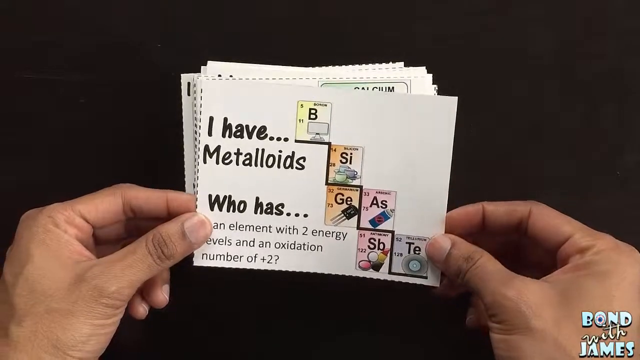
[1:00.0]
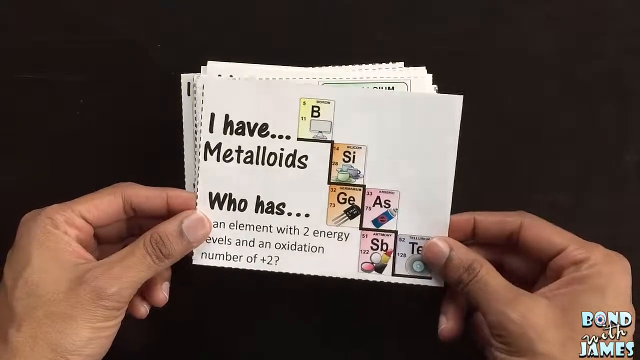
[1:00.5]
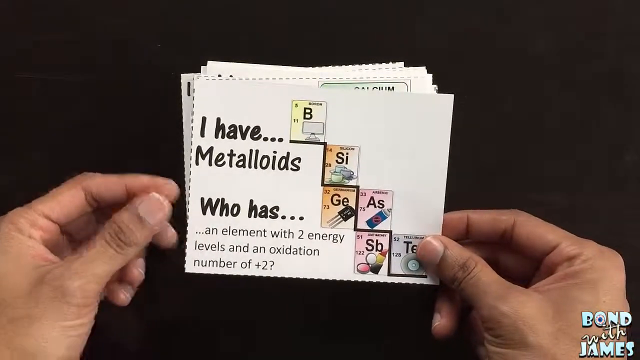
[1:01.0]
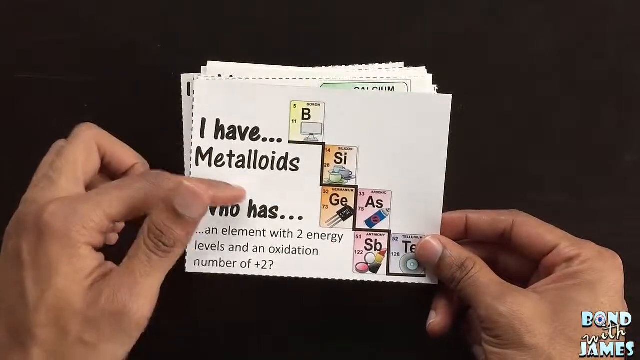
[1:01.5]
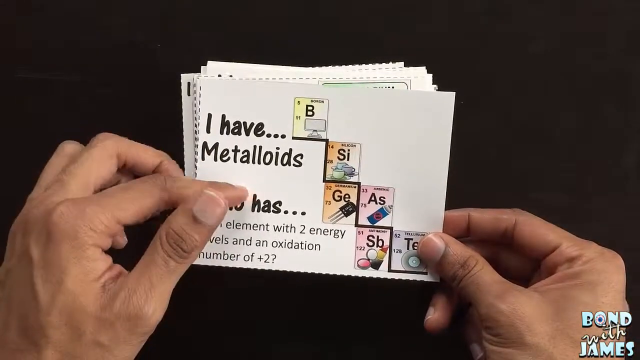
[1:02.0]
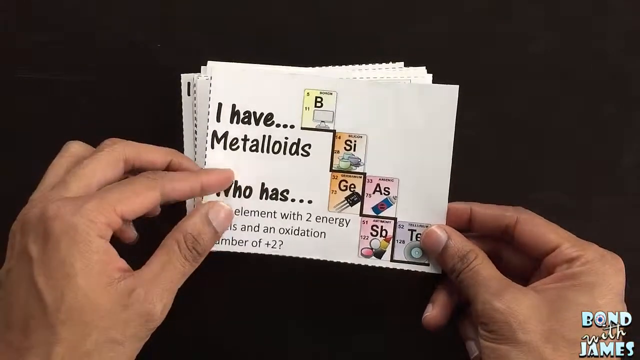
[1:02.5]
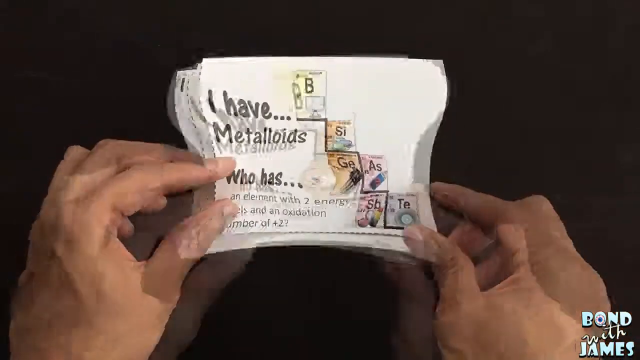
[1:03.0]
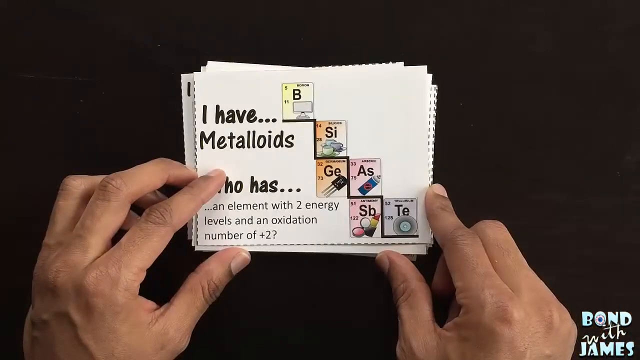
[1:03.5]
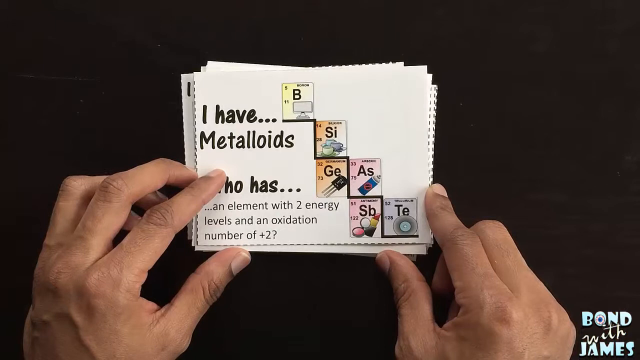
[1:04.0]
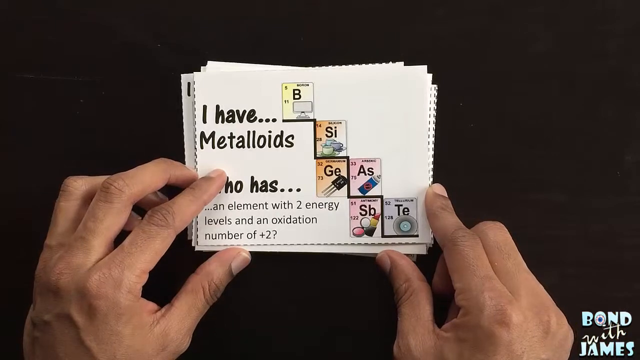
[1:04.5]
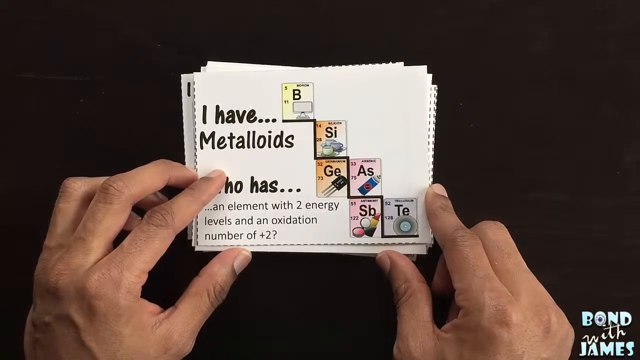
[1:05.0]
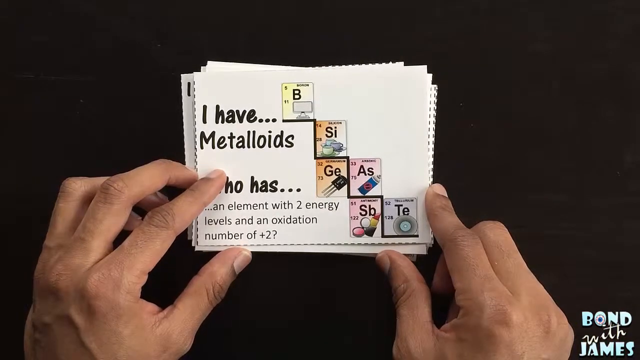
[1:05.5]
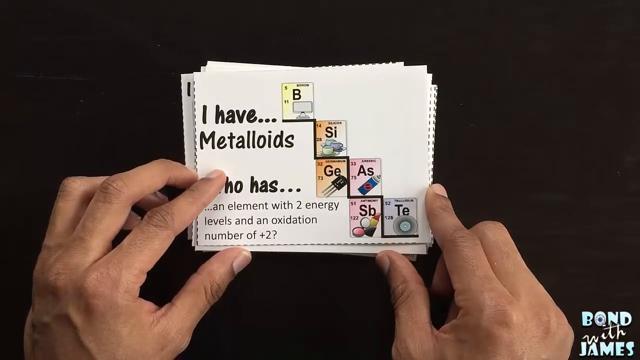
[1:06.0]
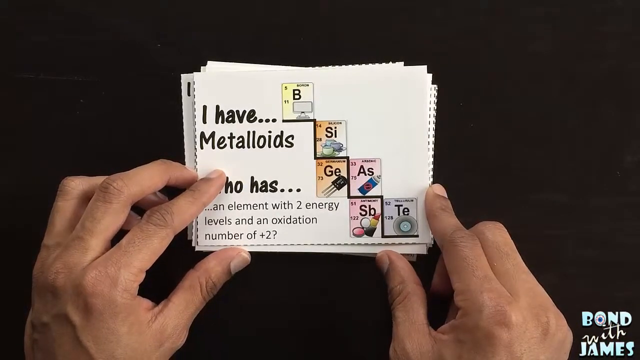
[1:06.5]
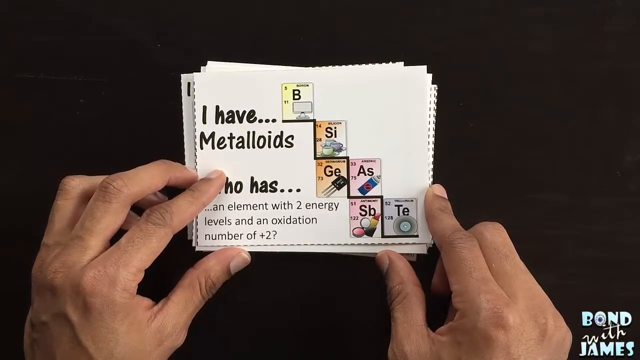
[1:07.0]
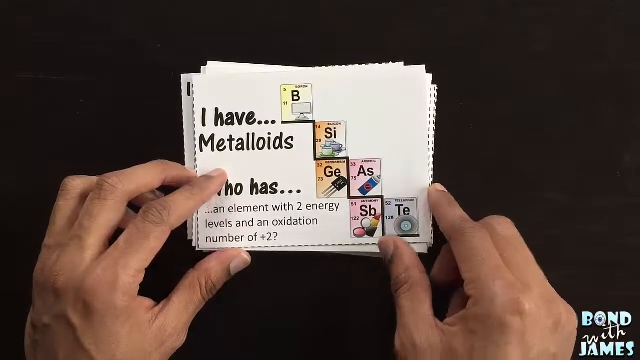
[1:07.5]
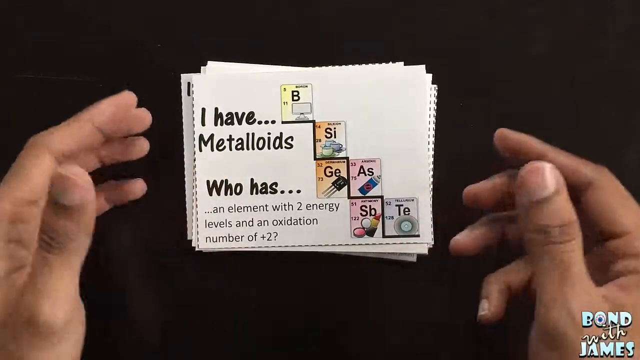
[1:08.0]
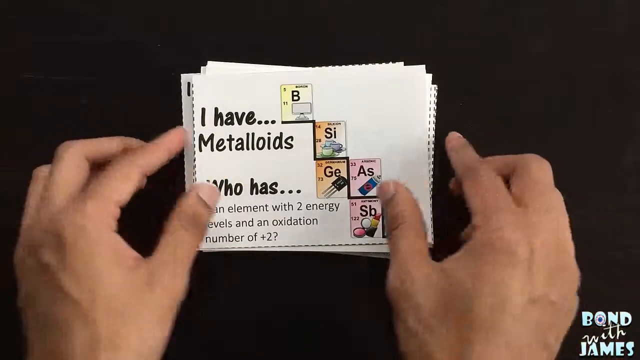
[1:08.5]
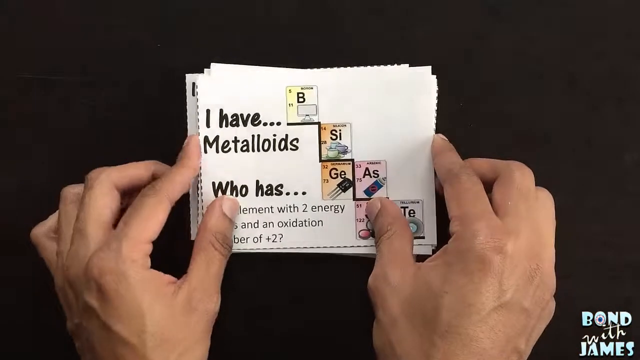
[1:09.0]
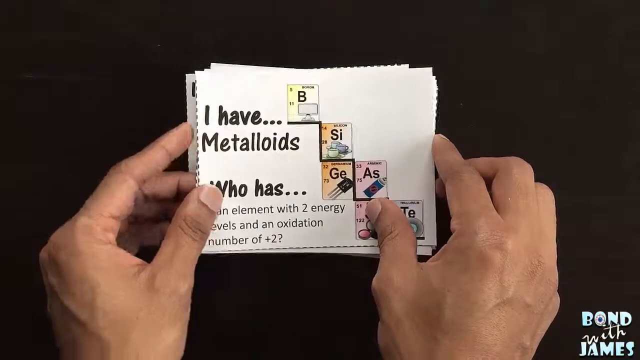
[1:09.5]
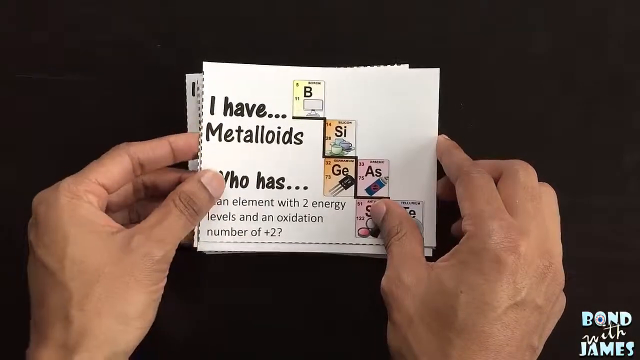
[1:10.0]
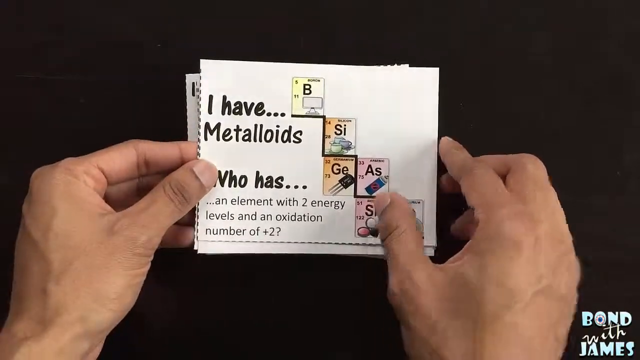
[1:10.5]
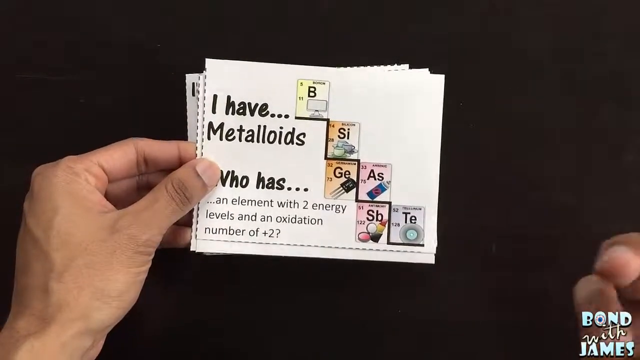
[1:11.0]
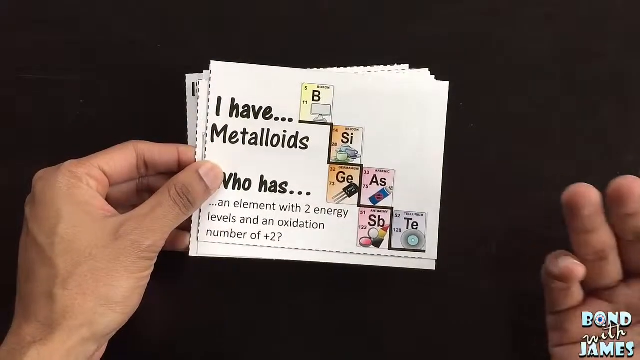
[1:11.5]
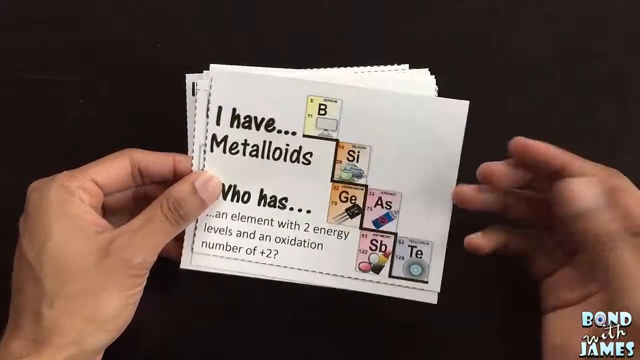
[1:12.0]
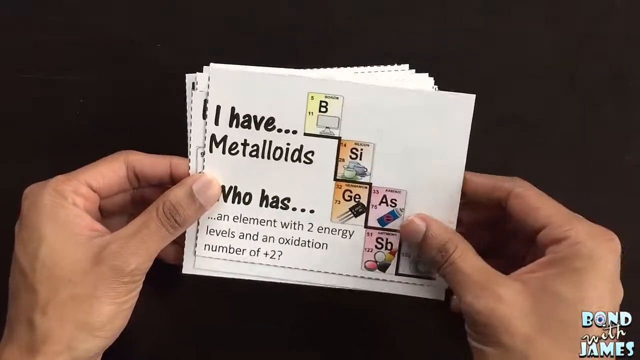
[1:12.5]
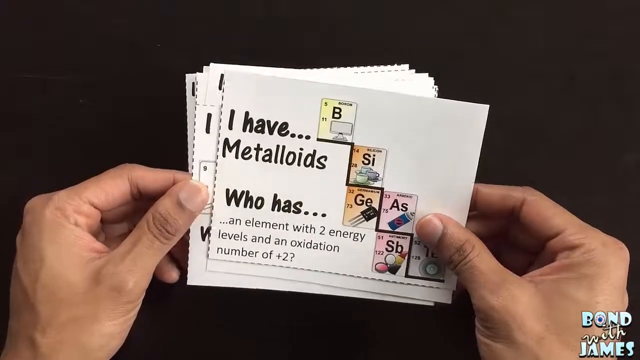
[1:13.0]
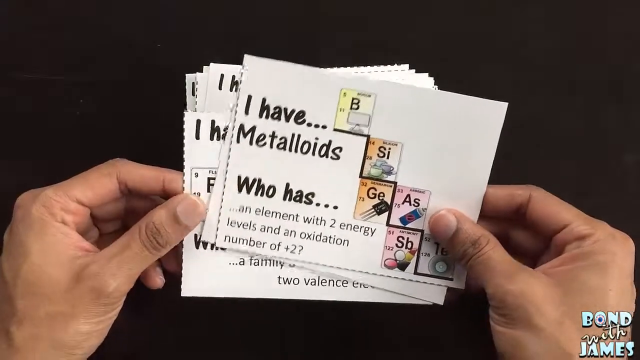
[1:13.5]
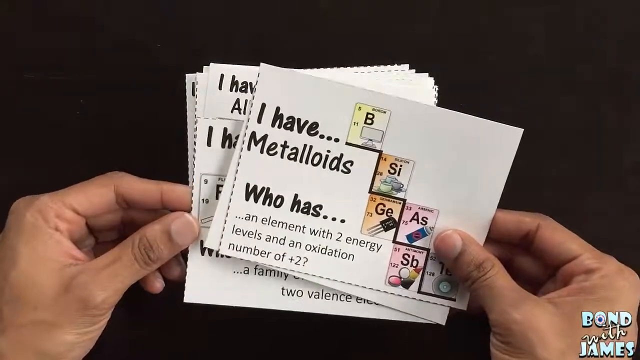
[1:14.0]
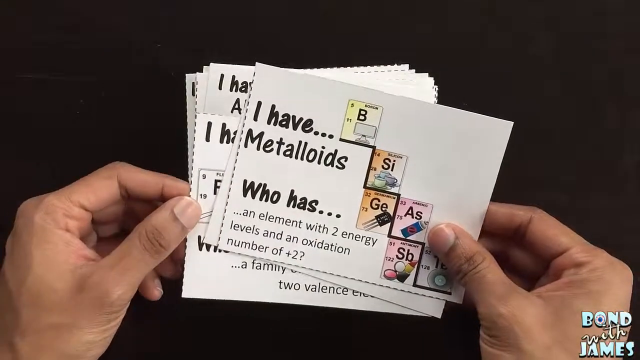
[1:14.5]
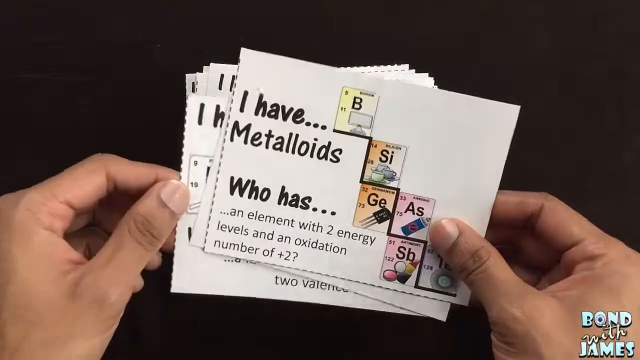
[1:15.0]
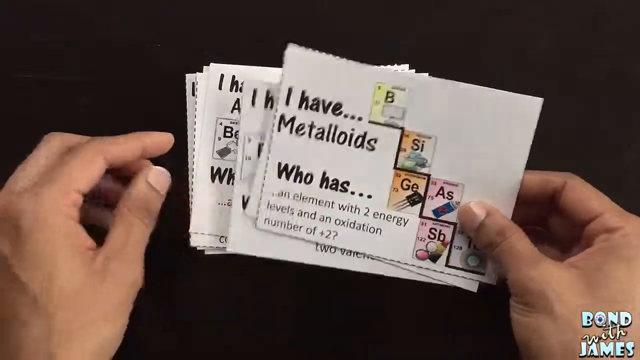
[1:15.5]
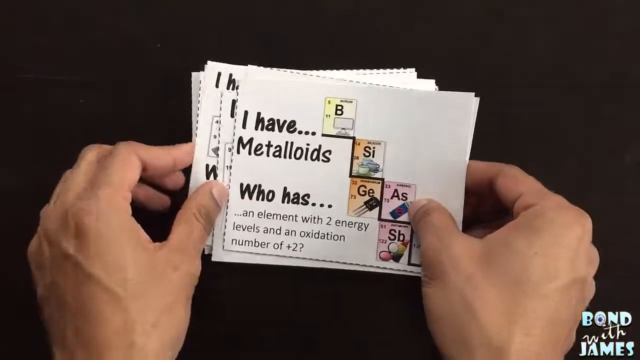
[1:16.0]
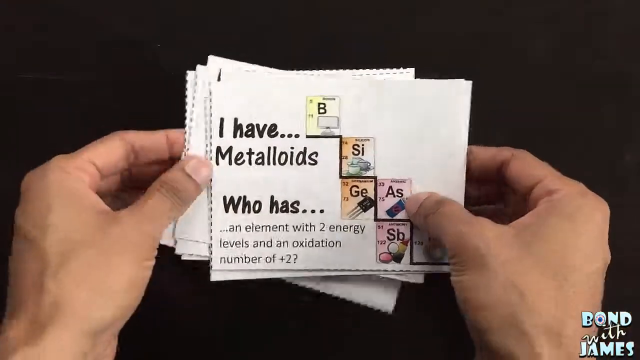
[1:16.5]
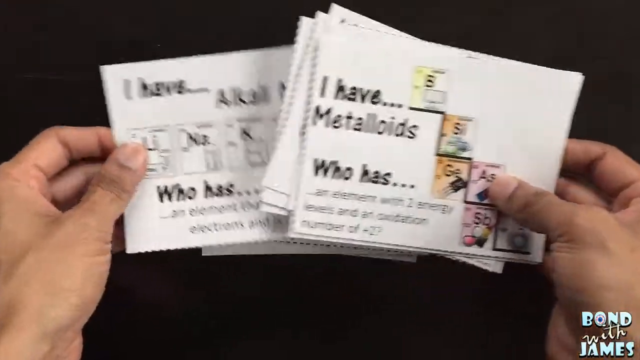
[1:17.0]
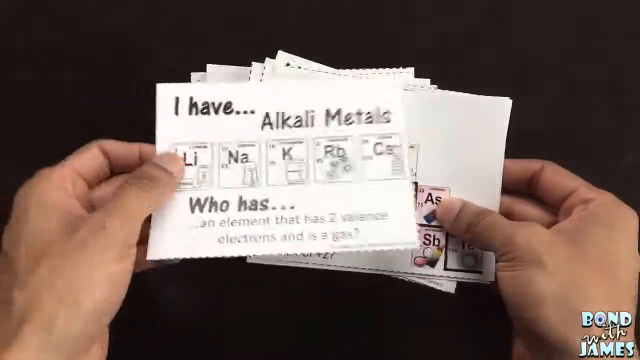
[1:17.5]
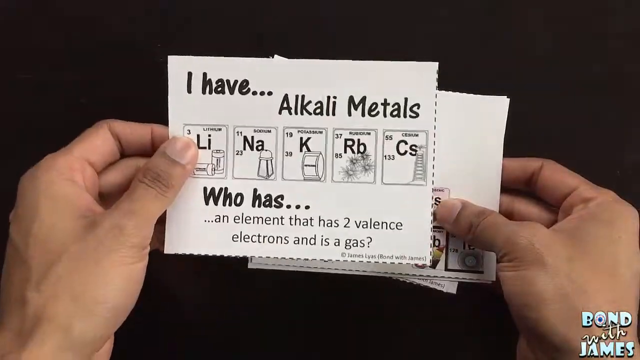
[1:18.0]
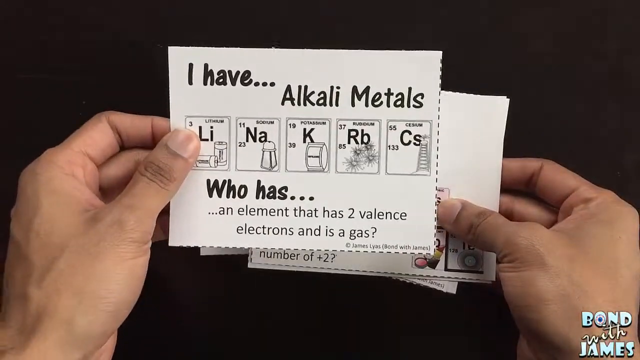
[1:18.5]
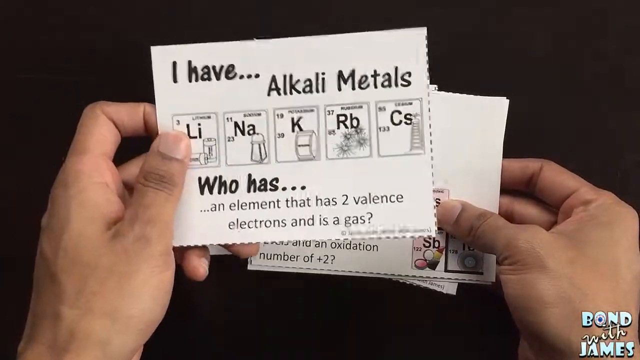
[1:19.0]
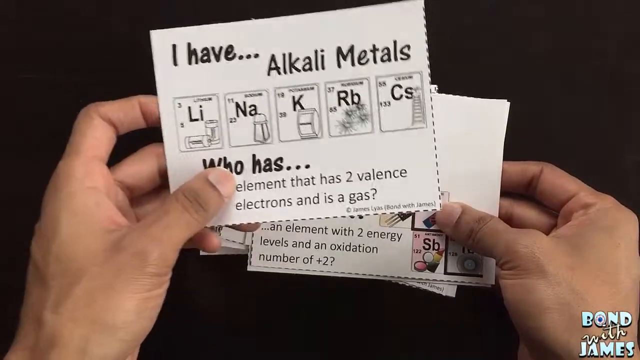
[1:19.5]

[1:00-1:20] Two hands hold a cue card that reads "I have metalloids who has an element with two energy levels and an oxidation number of plus two?" on its left side, with the periodic elements B, Si, Ge, As, Sb, and Te on its right side. The left hand pulls another cue card from the back of the deck. The new card says "I have...Alkali metals", with a total of five periodic elements at its center: Li, Na, K, Rb, and Cs. At the bottom it says "Who has...an element that has two valence electrons and is a gas". The person holds this card with his left thumb and index finger. The overhead shot has a dark wooden table in the background.